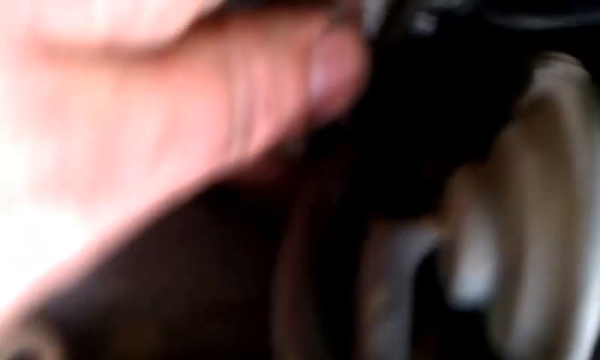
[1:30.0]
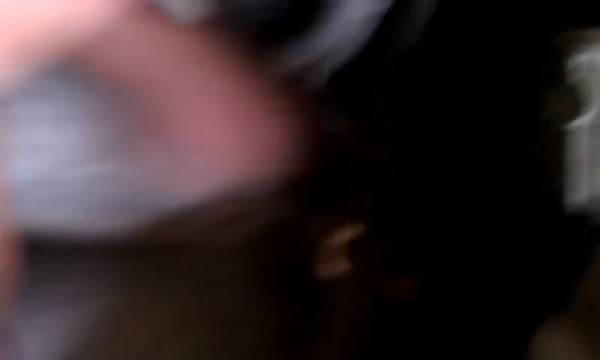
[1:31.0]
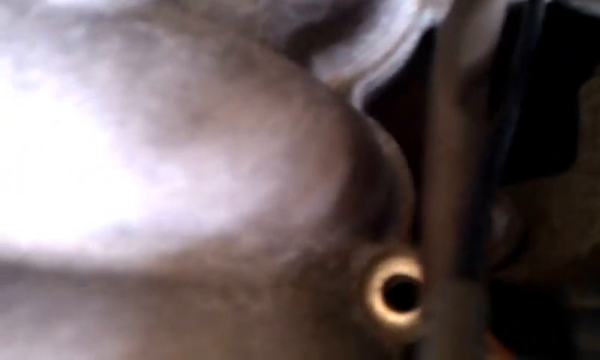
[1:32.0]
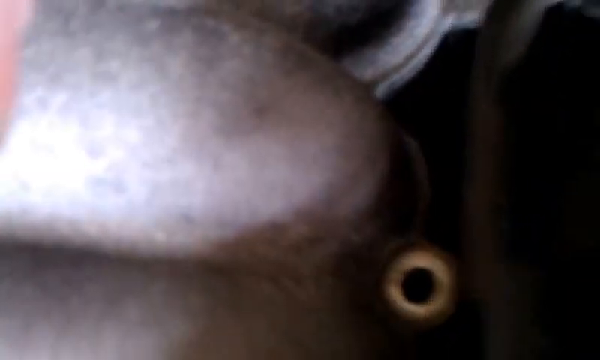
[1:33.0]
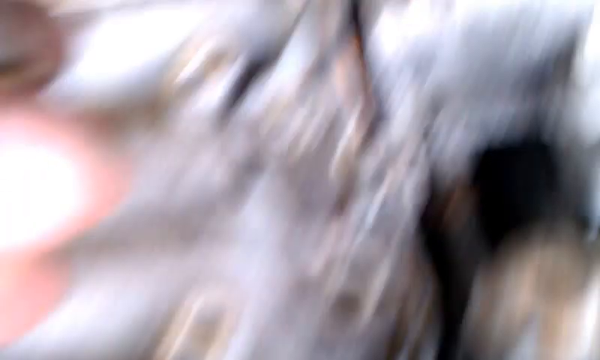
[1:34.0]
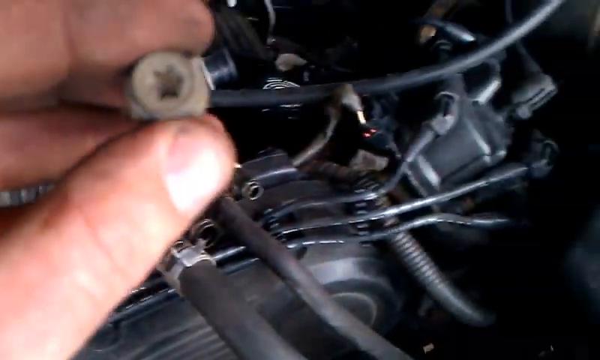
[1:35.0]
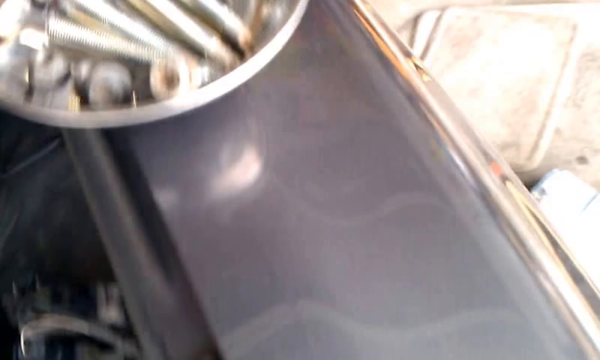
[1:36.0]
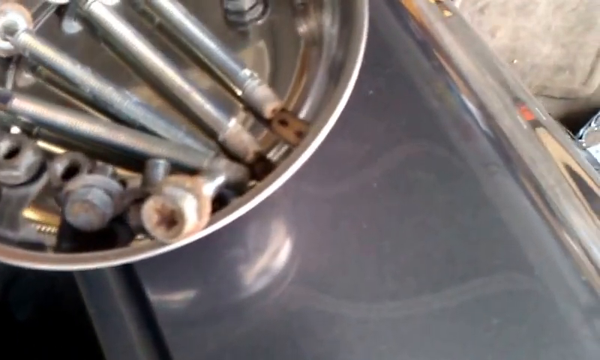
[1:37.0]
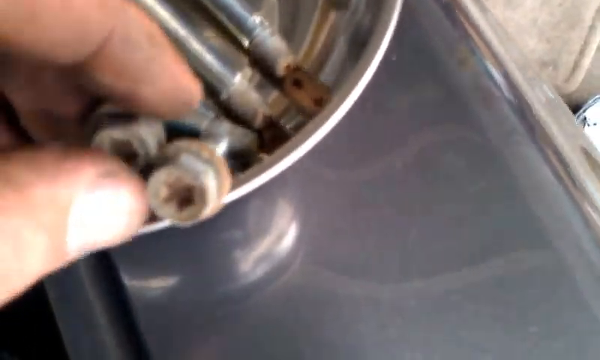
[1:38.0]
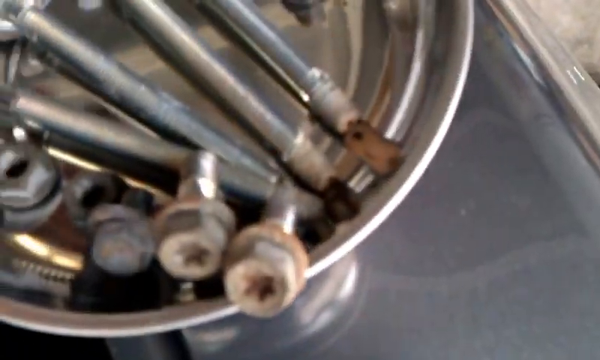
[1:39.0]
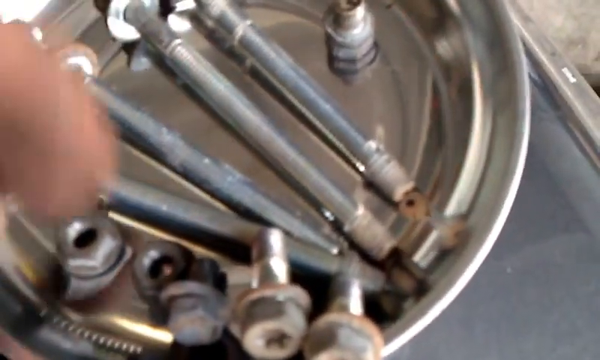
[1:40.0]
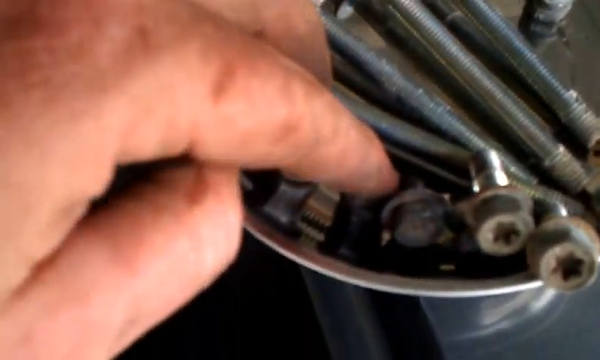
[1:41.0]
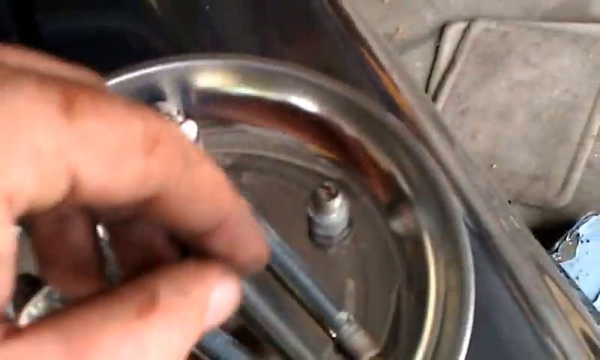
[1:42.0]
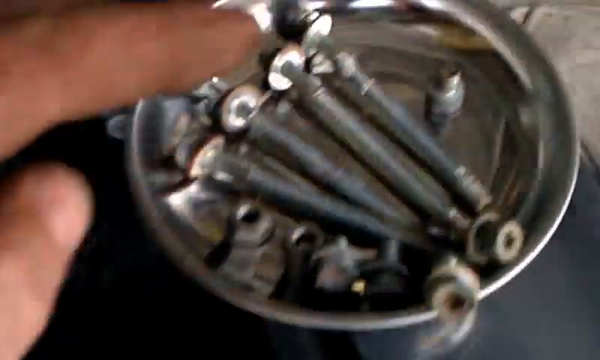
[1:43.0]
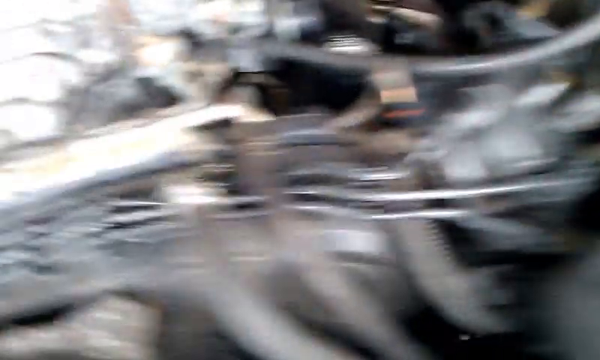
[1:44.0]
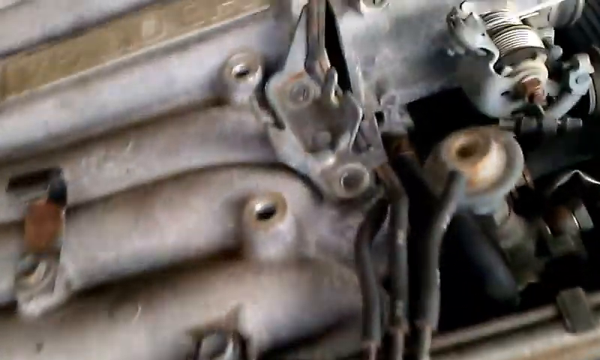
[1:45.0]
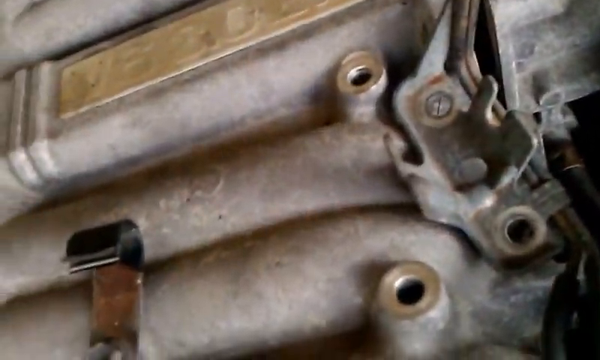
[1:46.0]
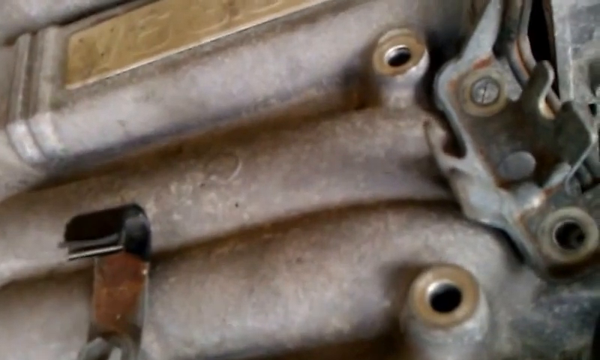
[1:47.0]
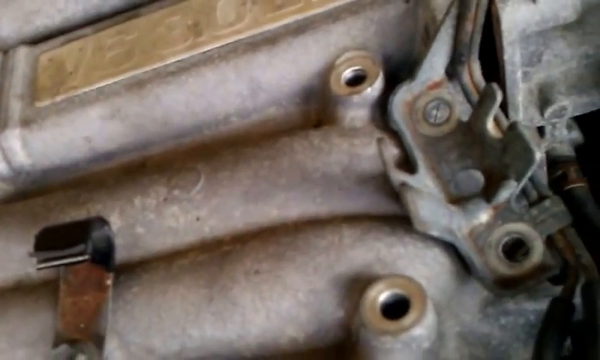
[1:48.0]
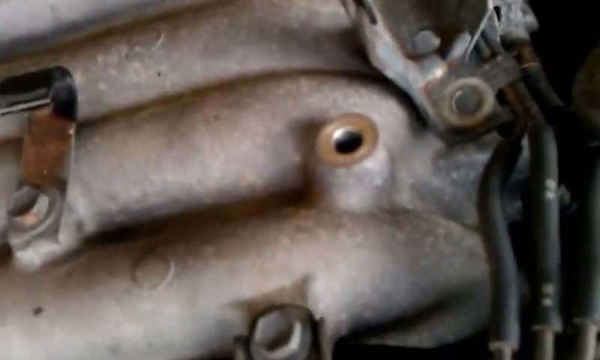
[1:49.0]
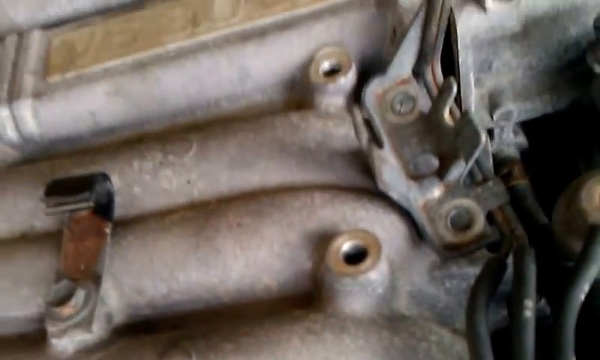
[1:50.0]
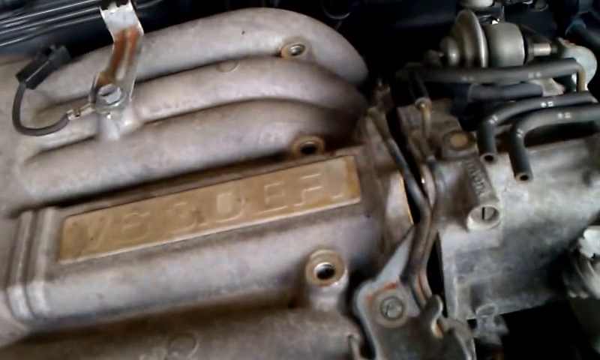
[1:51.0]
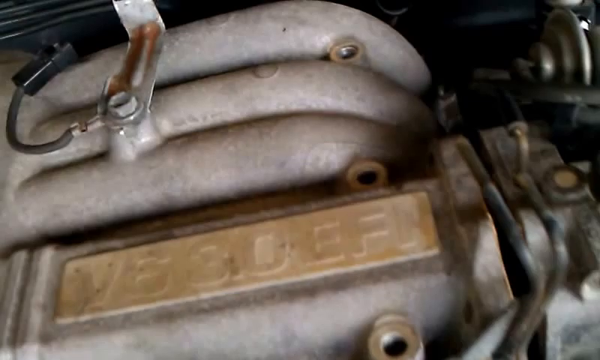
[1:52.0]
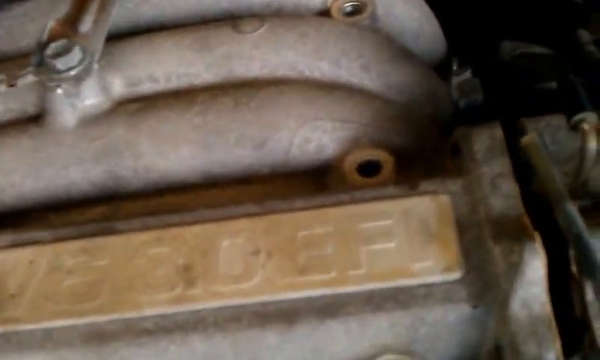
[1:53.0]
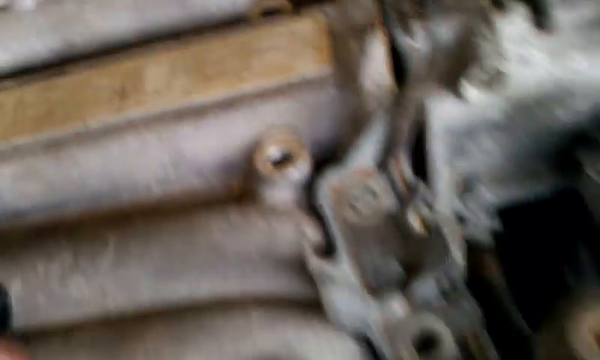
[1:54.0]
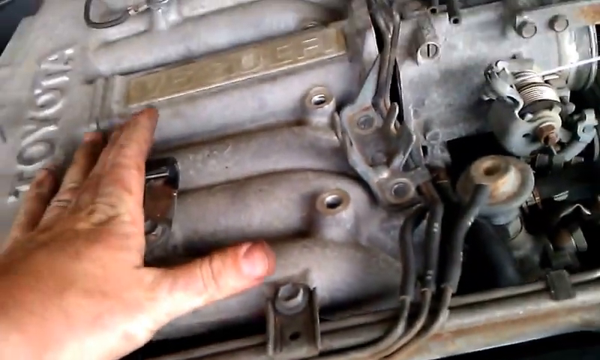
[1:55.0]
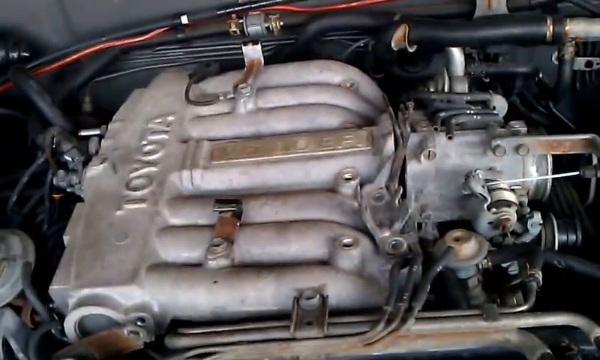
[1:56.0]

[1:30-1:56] He goes a little farther up in the engine, focusing down on the side of the main part, pointing at one of the holes that has no screw in it. He backs all the way out and shows the screw again as he moves to the right. Over on the right, another of these screws lies in the bowl, and he sets it to the side of it. There are four long screws with washers on the ends, four bolts that go on them, and four smaller screws, the ones he was showing, which have a hexagon at the top to twist and loosen them. A finger comes in from the left and points at some of the bolts; he picks up another one, moves to the other side, then goes back to the engine. A plate on it says "V6". The camera is back over the engine, with the little loose part he was moving just on the right side. There are two holes, one down to the left and one up to the right of that, and the grayish engine from there over. The camera slowly moves up and down a little, the hands move up and down again, and it moves closer to the top, showing two more empty spaces there. He rests his hand on the engine, then takes his hand off the screen.